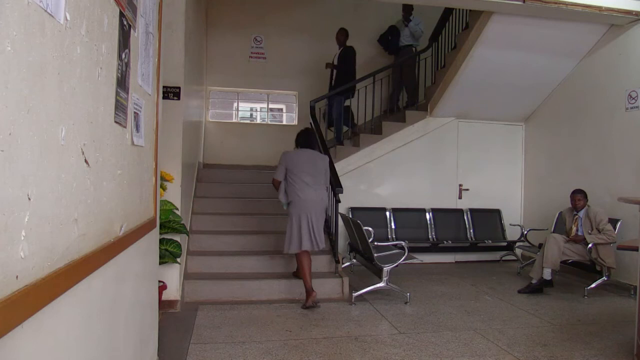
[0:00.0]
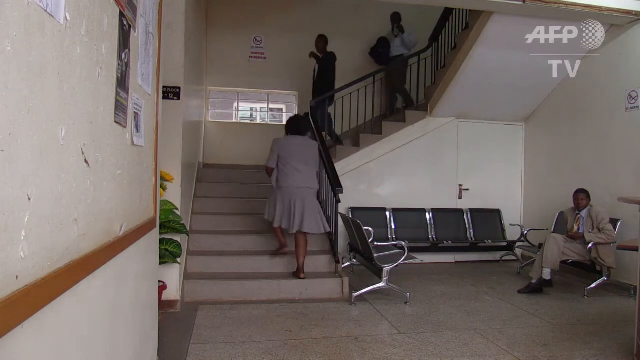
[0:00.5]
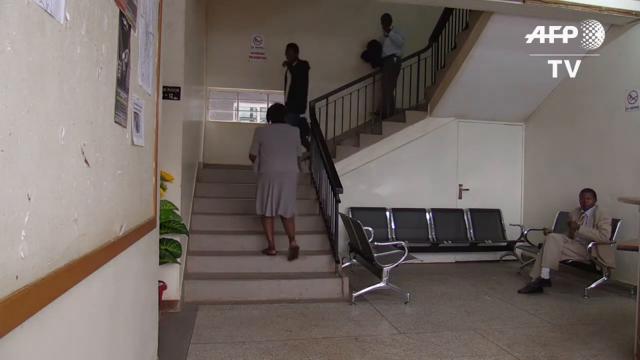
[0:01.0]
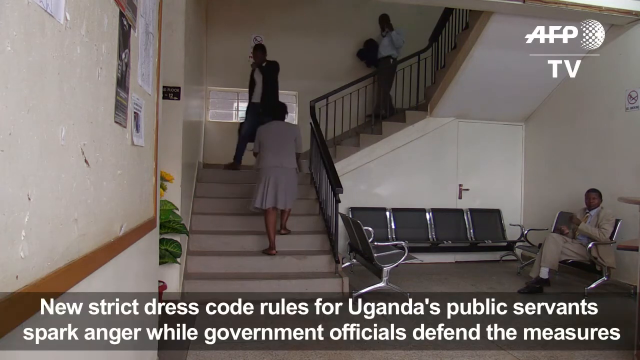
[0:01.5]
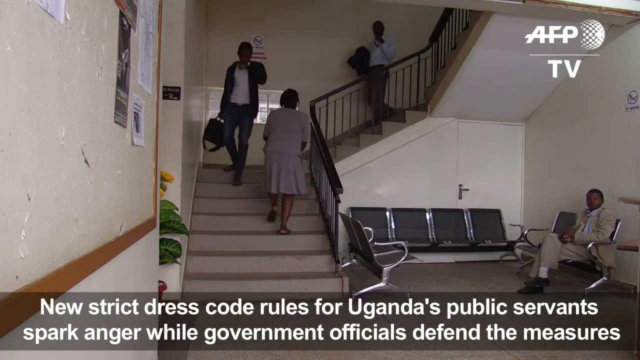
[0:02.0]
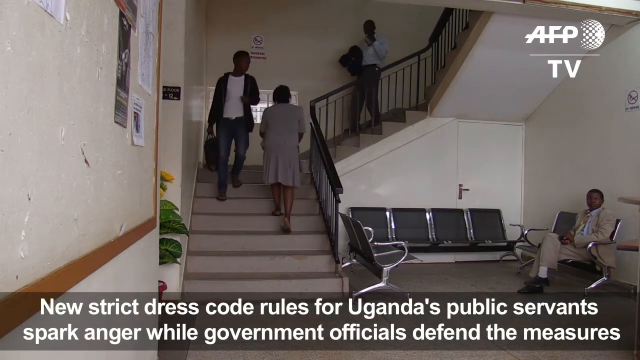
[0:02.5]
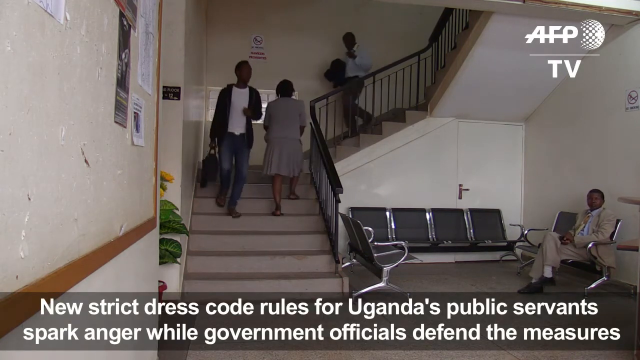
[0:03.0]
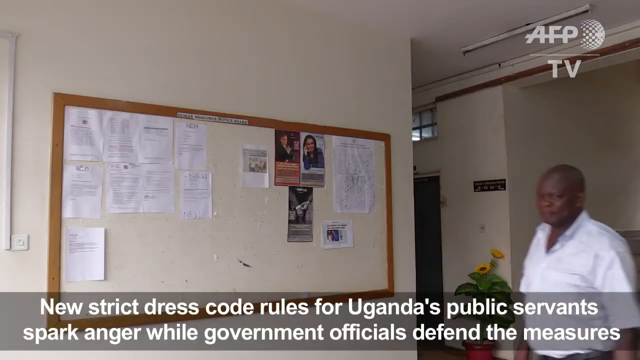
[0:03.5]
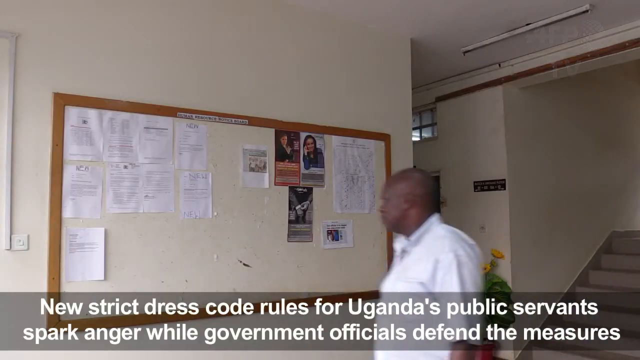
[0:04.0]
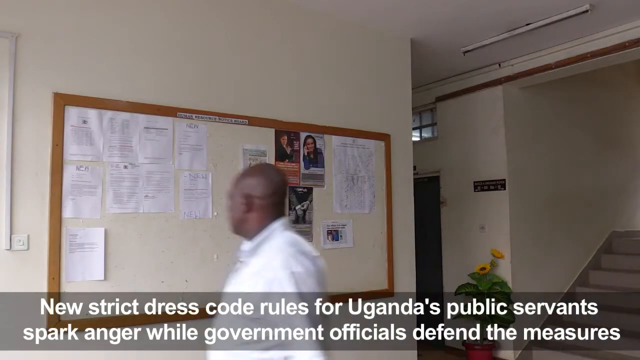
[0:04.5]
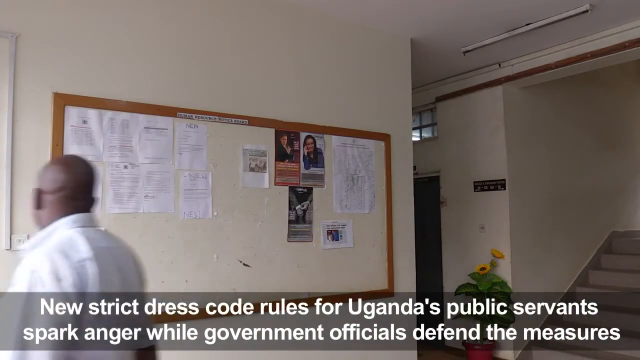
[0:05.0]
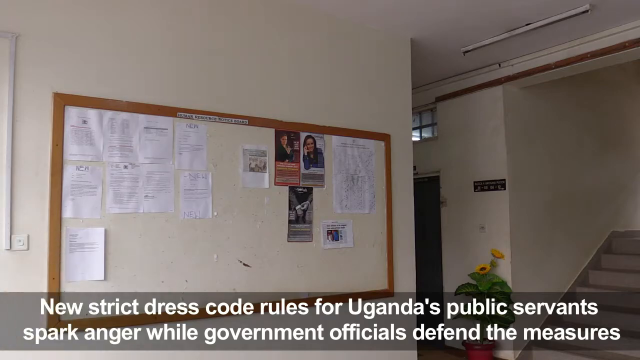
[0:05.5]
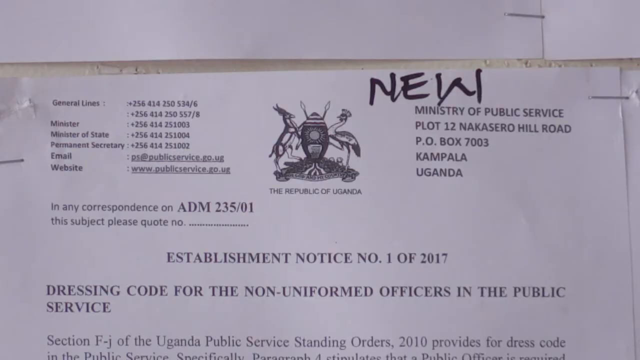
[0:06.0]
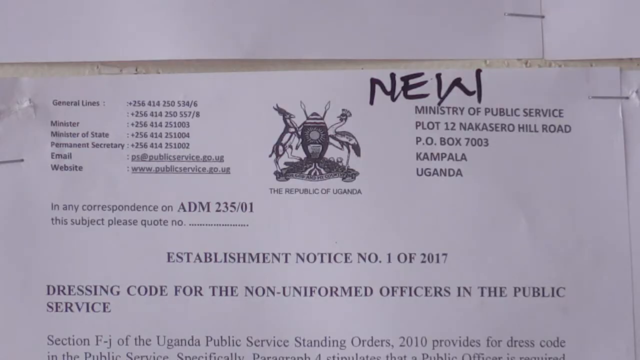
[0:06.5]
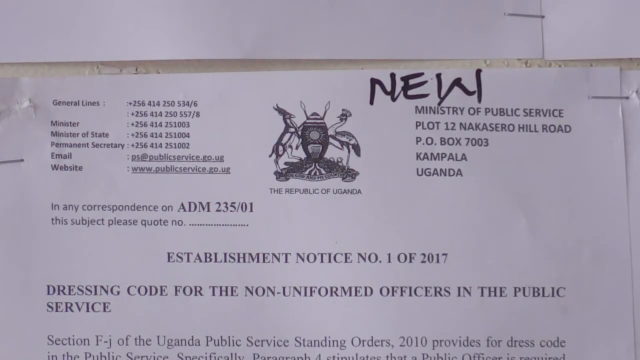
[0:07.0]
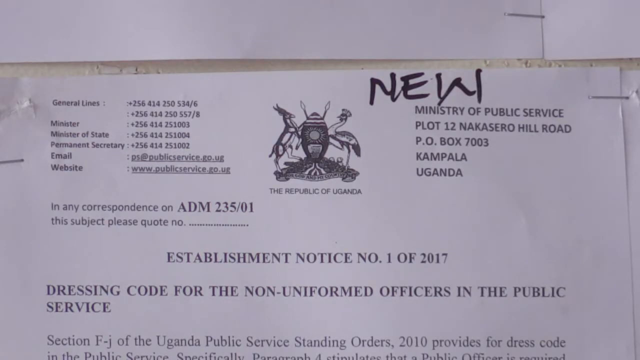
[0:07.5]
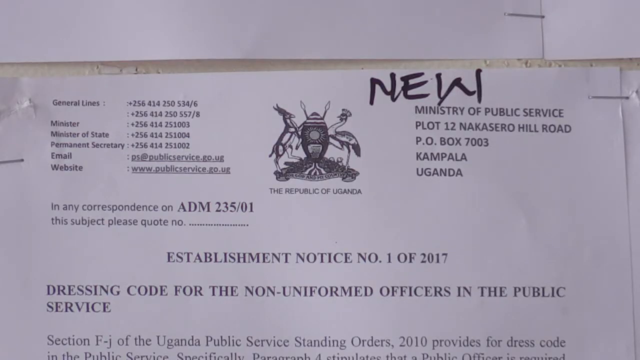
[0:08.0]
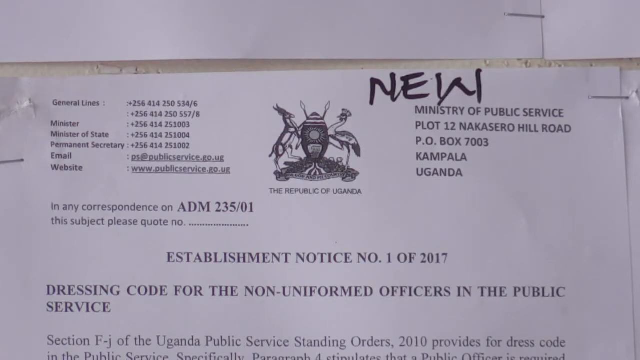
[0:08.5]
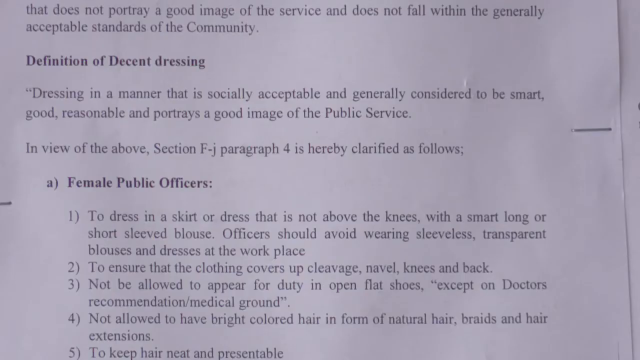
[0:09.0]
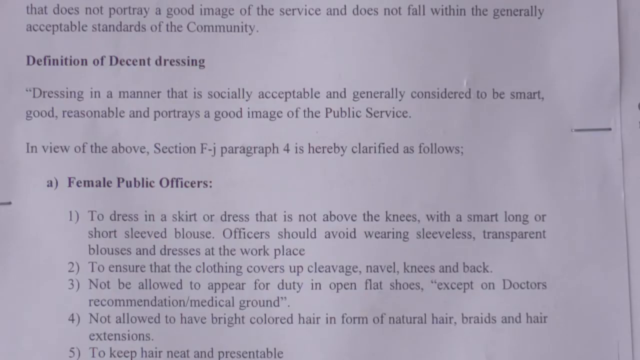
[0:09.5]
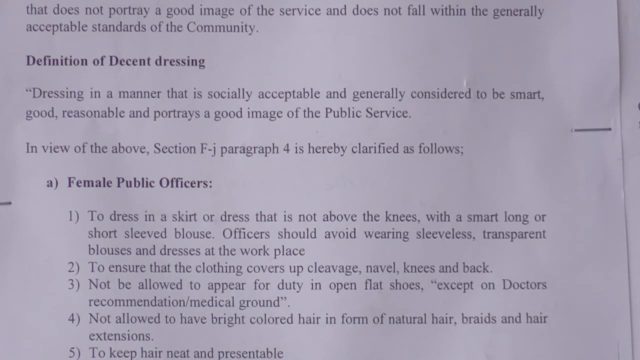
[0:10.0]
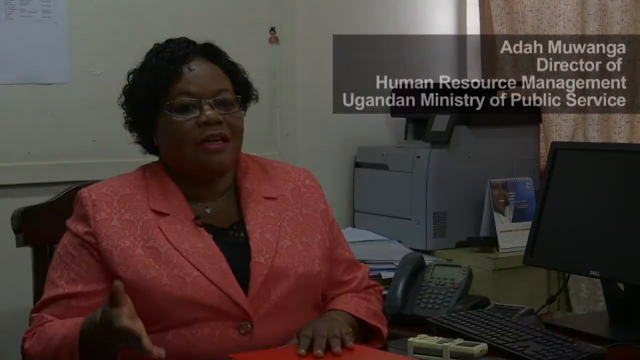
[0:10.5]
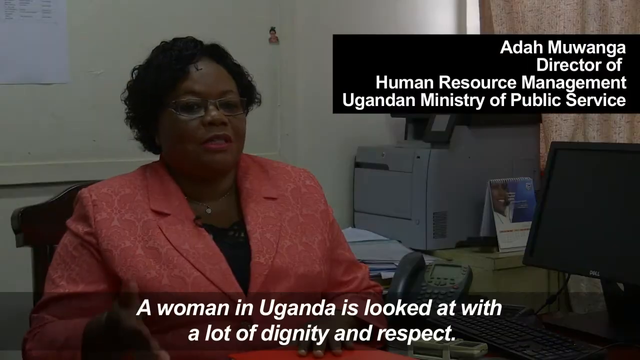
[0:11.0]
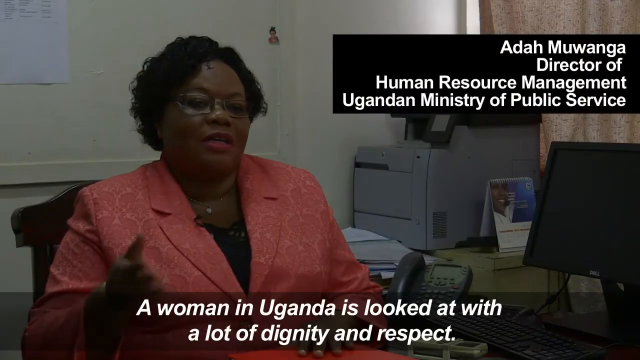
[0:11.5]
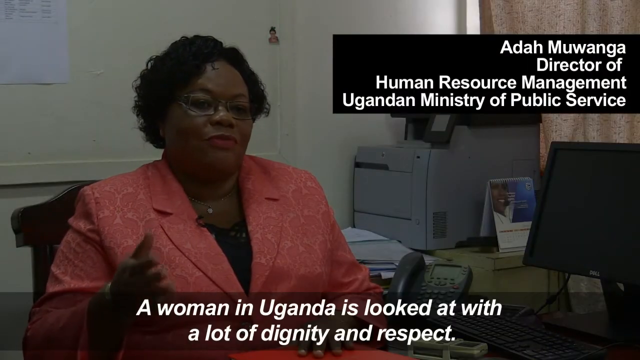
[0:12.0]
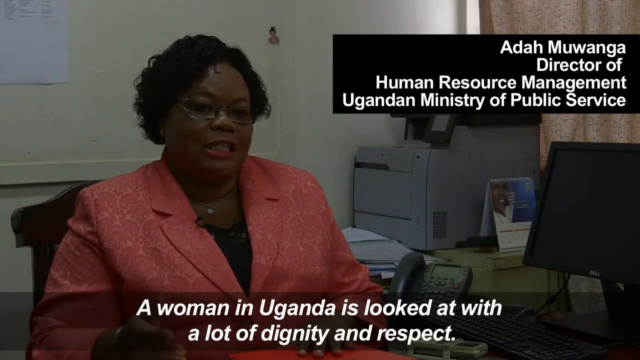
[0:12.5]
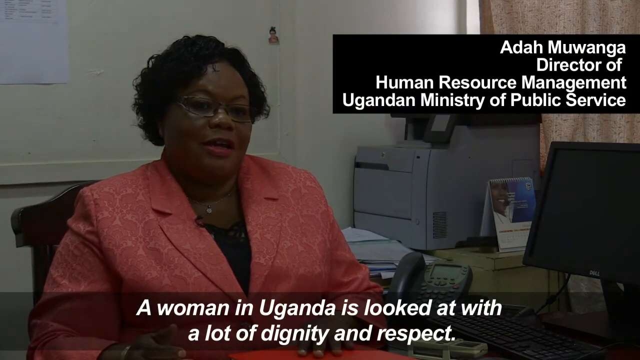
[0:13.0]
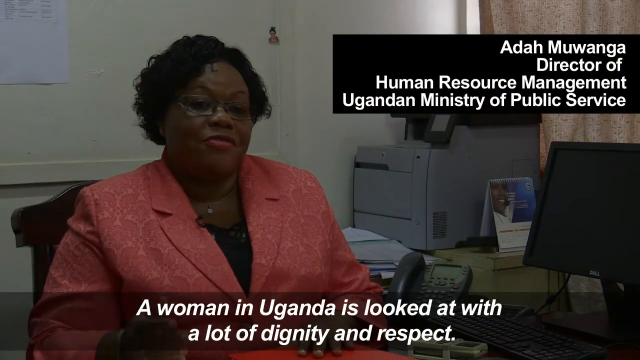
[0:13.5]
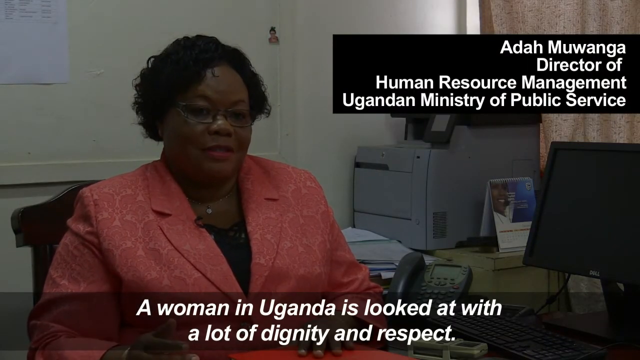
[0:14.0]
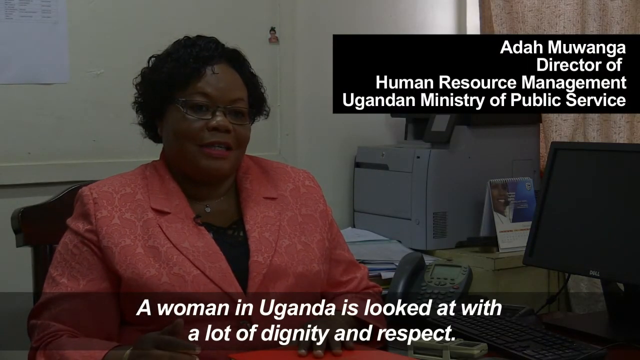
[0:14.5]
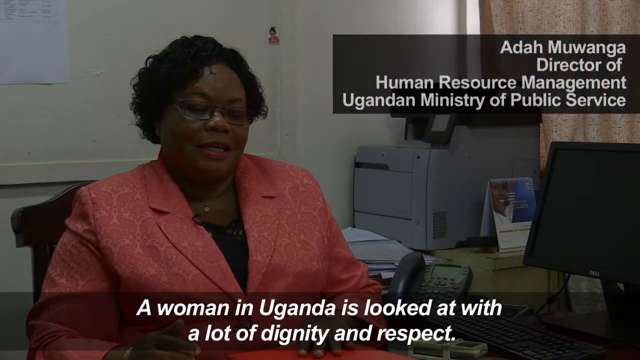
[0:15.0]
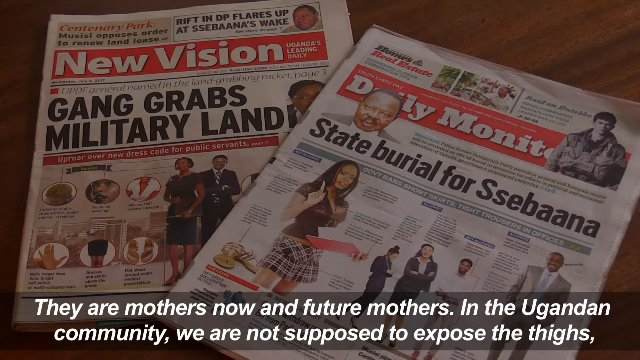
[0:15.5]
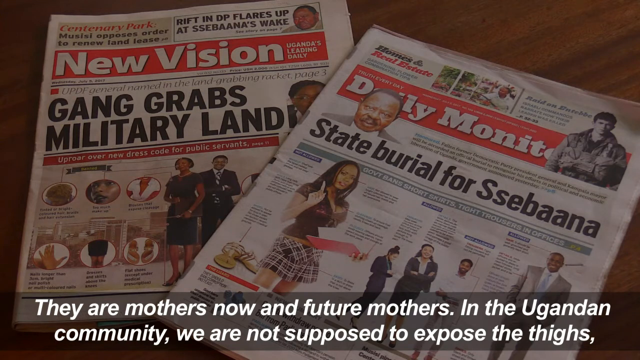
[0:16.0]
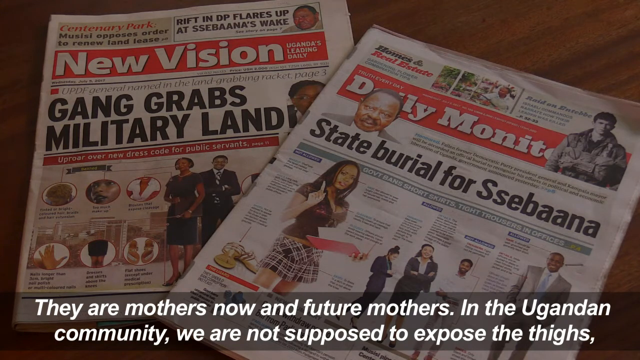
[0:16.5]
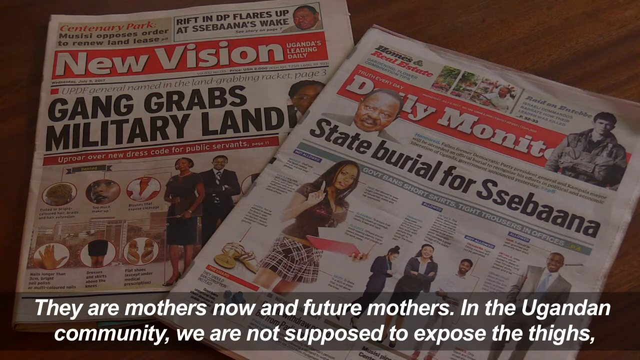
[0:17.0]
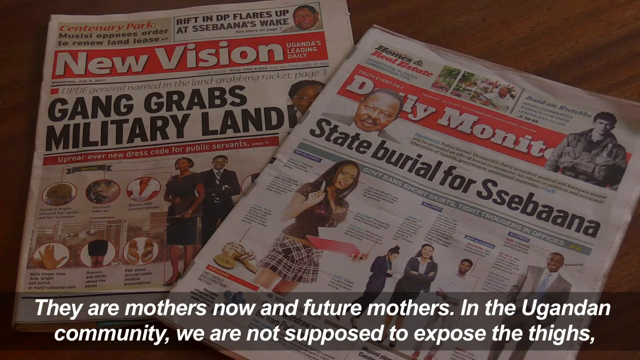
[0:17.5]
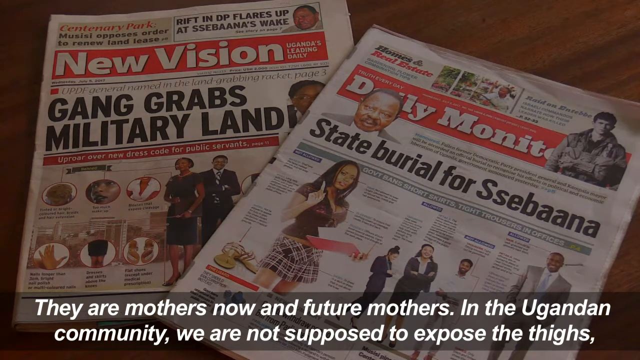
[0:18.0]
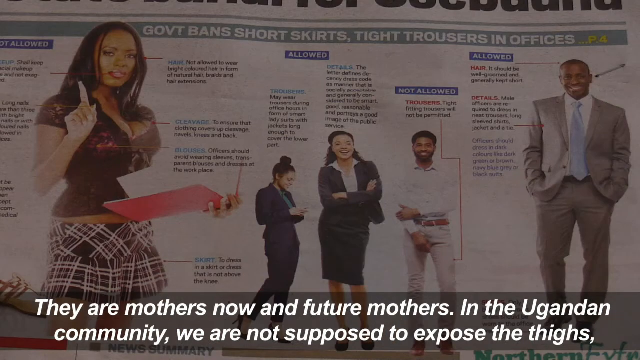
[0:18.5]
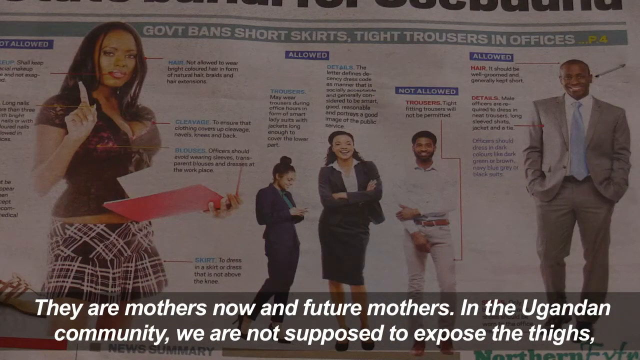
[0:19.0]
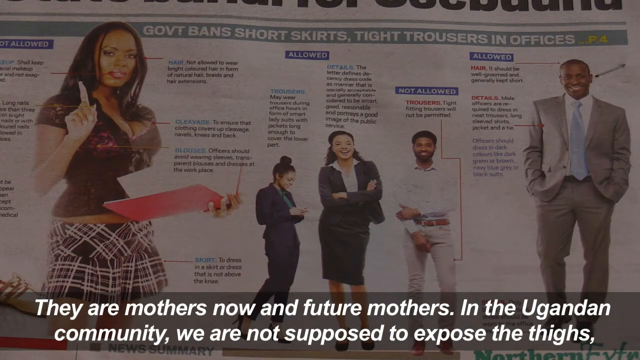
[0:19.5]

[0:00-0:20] A stairway appears in what looks like an office building. On the right-hand side of the stairway, at the bottom, there is what looks like a reception waiting room, with a big white door behind one of the chairs. A woman wearing a grey dress walks up the stairs. To the left of the camera there is a flower pot with a tree, and on the left-hand side of the screen there is a board for advertisements. Further up the stairway there is another board with announcements in front of a glass, and then a no smoking banner. On the right-hand side, two individuals, one carrying a jacket and one holding a bag, travel down the stairs. A banner with subtitles appears at the bottom of the screen, mentioning "strict dress code rules for Uganda's public servants" and "government officials defend the measures". The view then changes to show part of the staircase and another door, dark black, at the far left of the staircase, with a window above it. A man in a white shirt walks into the frame and looks toward the advertisement board as he passes it. What looks like a notice is stapled across the advertisement board. A woman named Adama is then seen sitting in an office, and two newspapers are on the table.